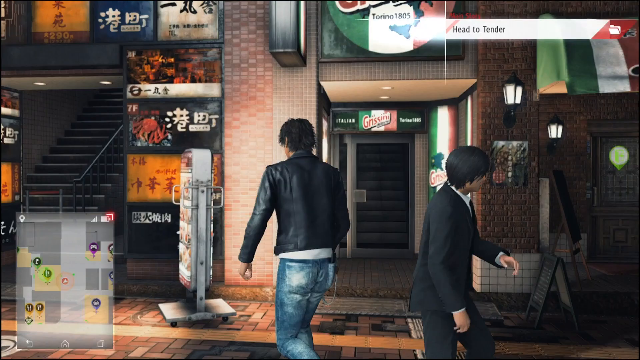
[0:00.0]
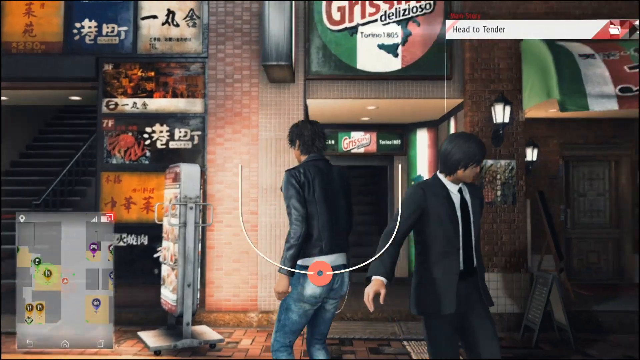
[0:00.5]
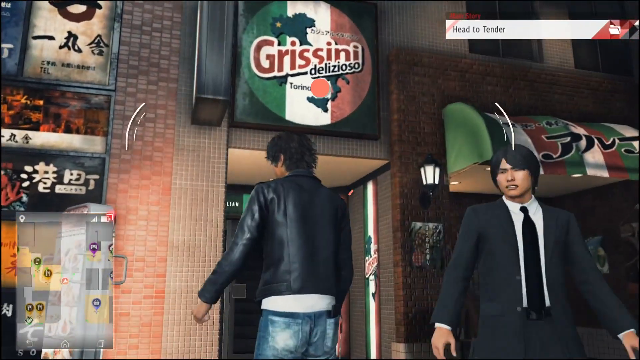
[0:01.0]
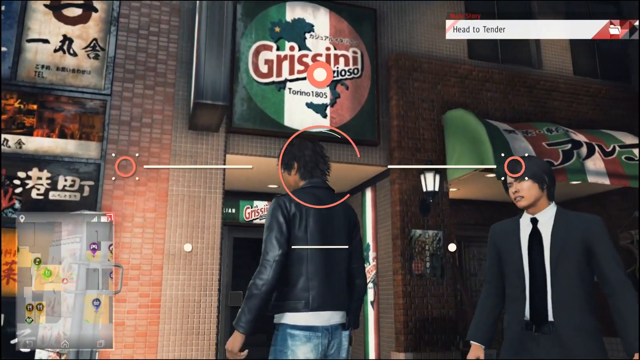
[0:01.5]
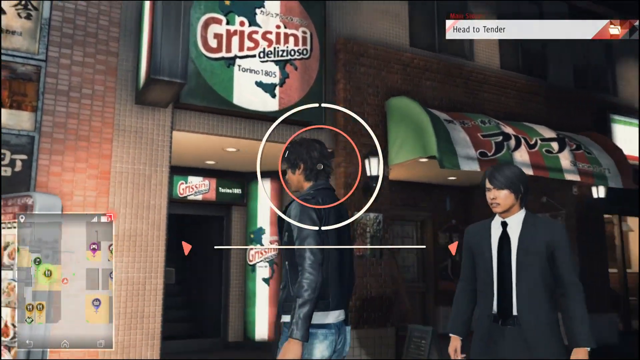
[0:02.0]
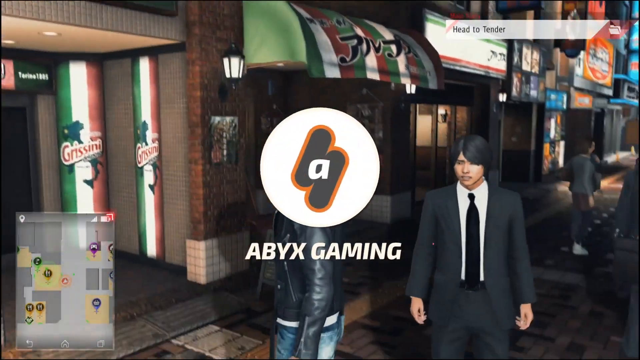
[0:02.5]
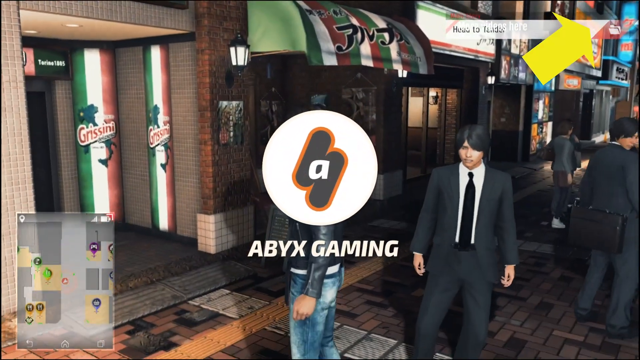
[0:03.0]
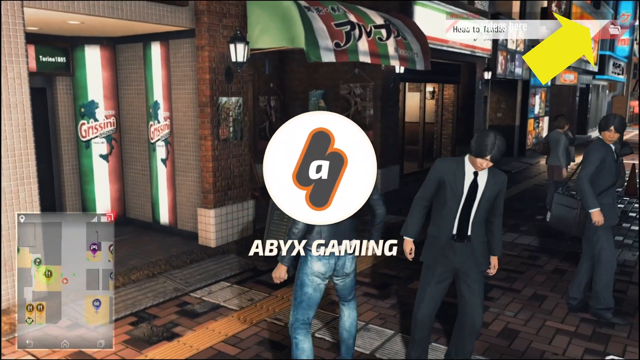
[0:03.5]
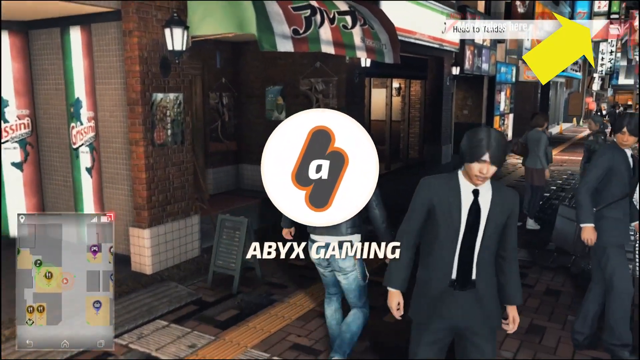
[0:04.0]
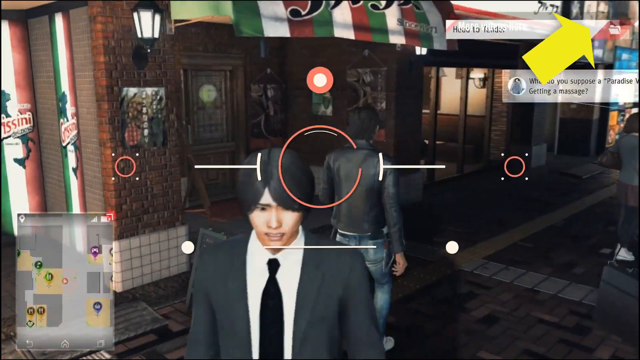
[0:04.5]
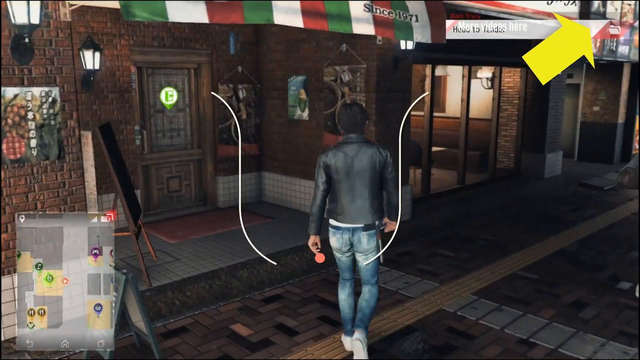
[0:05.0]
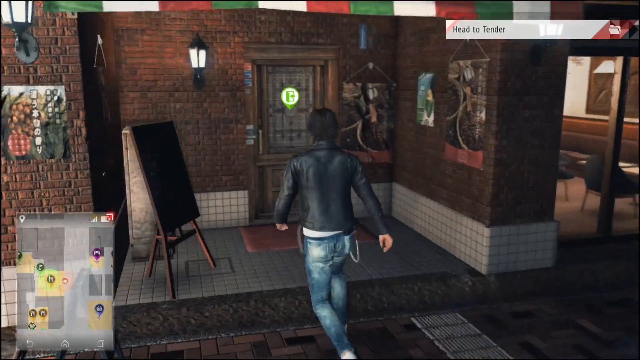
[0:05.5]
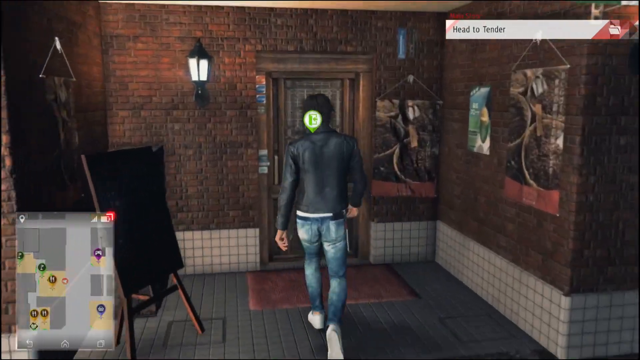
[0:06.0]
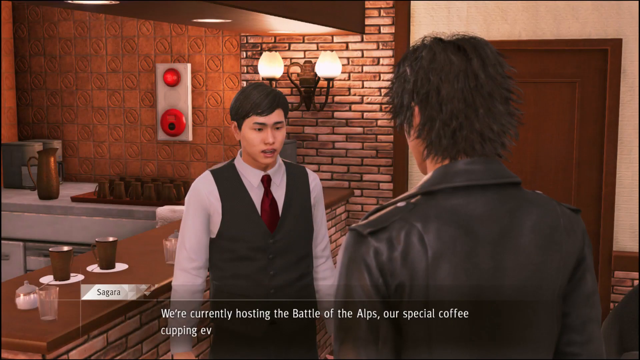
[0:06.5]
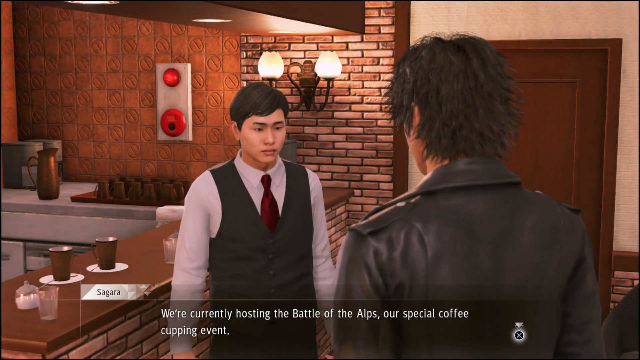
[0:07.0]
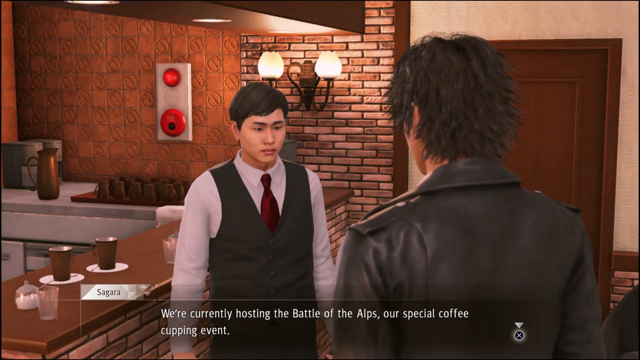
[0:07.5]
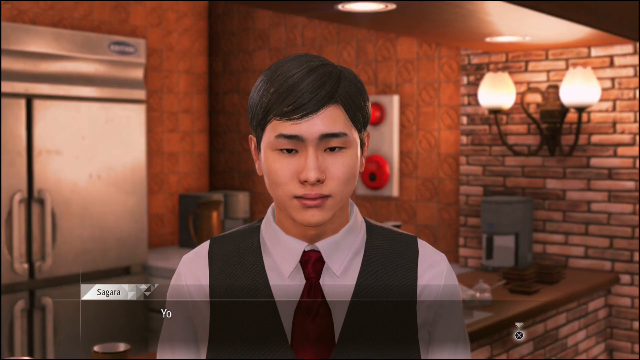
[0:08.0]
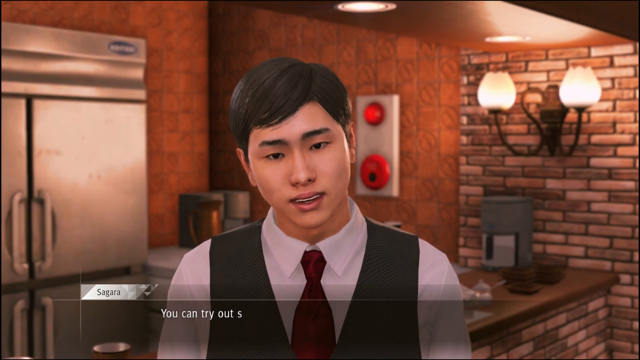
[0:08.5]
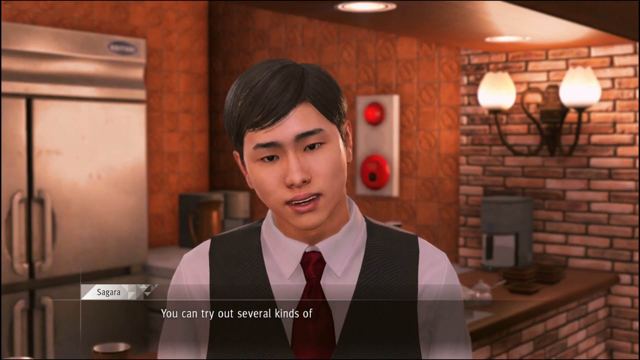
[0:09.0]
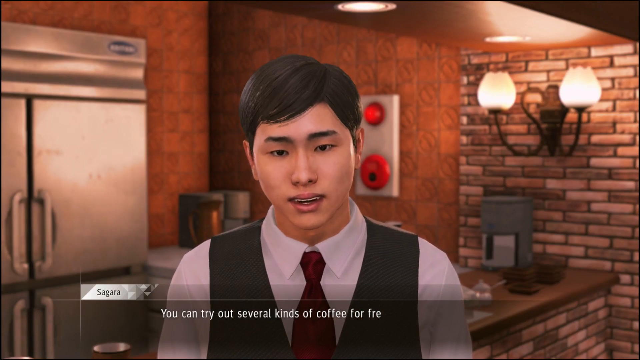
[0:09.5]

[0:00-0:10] Two men stand outside a restaurant, or possibly a deli. The signage on the outside of the restaurant is in an unfamiliar language that looks like it might be Chinese or Japanese. One of the men wears a suit, and the other wears blue jeans and a black leather jacket. The man in the black leather jacket enters a building. The video then cuts to another scene where the man in the leather jacket is speaking to another man who looks to be a waiter or a server of some sort. The server wears a white button-up shirt underneath a black vest with a maroon tie.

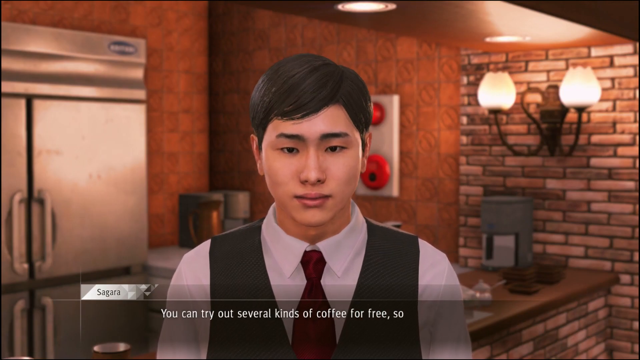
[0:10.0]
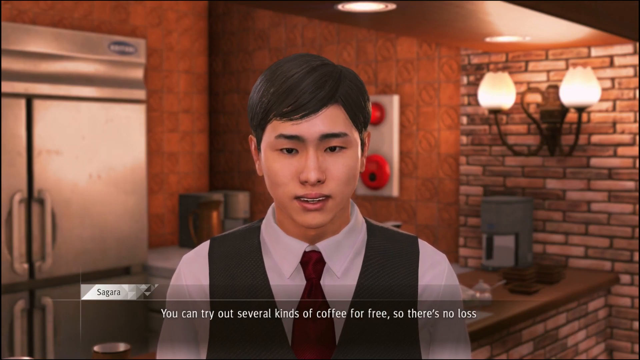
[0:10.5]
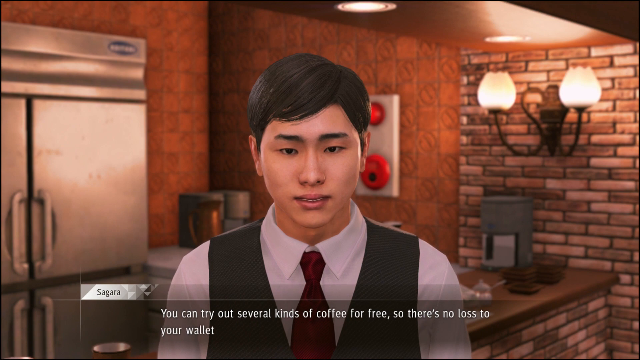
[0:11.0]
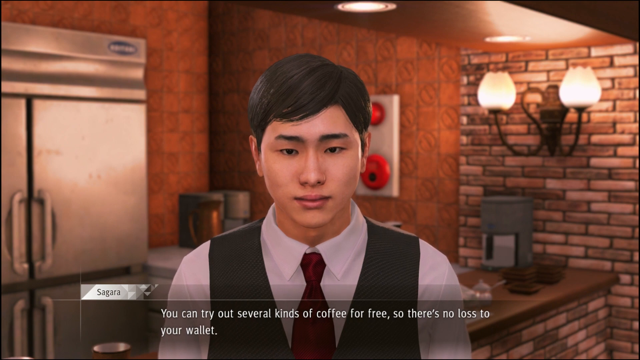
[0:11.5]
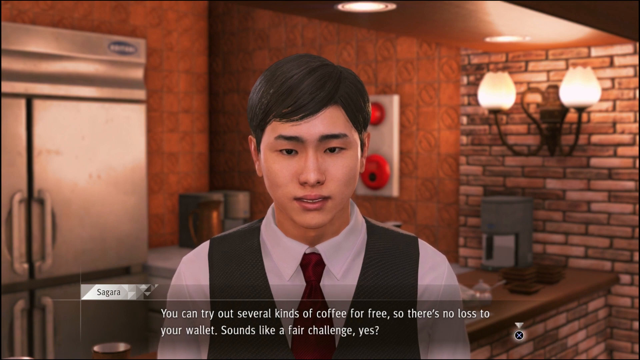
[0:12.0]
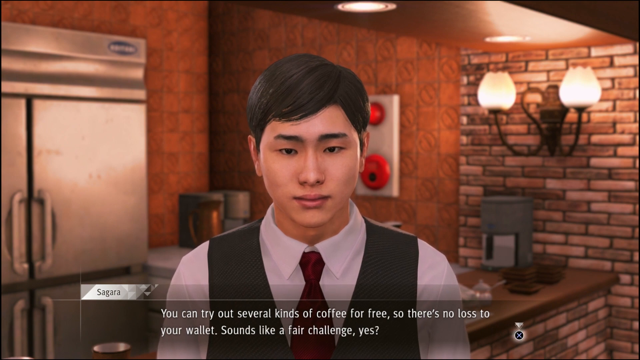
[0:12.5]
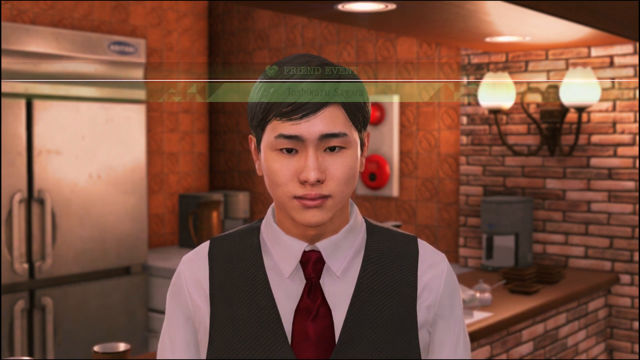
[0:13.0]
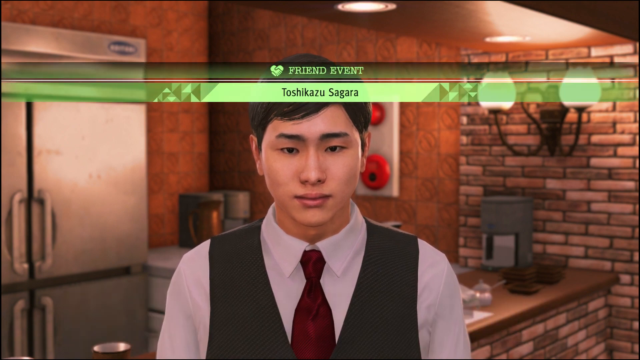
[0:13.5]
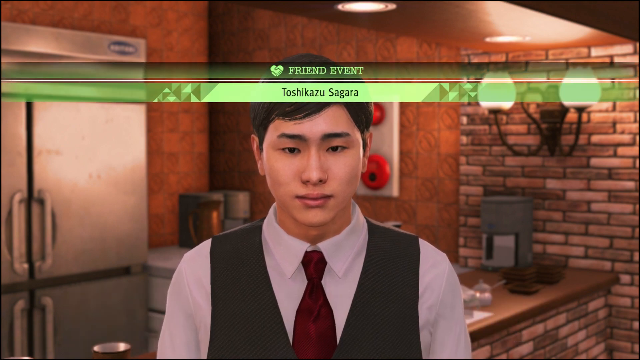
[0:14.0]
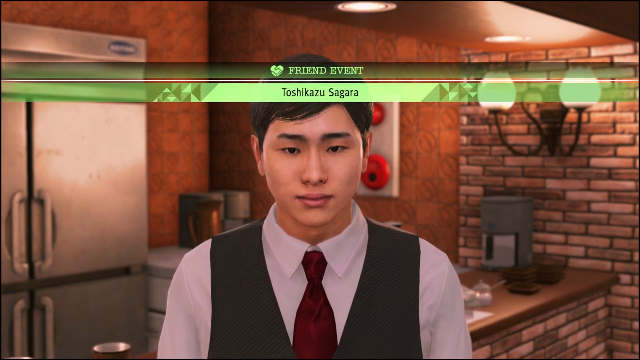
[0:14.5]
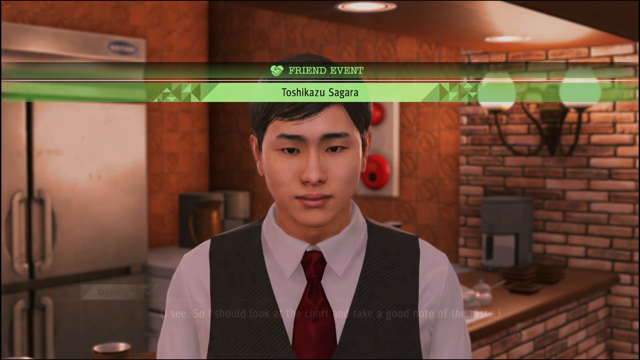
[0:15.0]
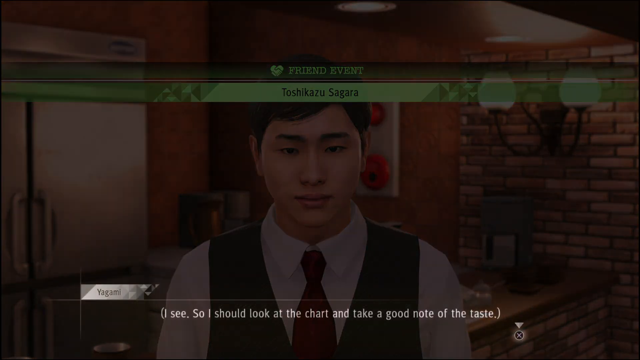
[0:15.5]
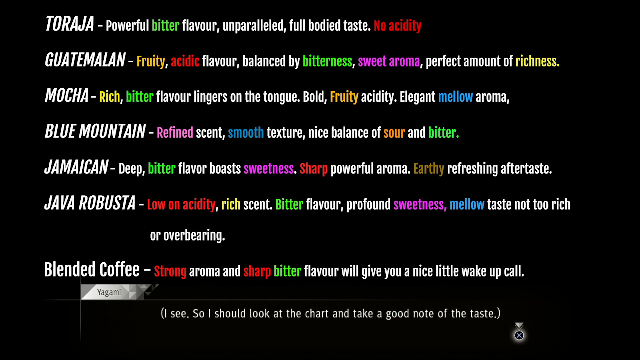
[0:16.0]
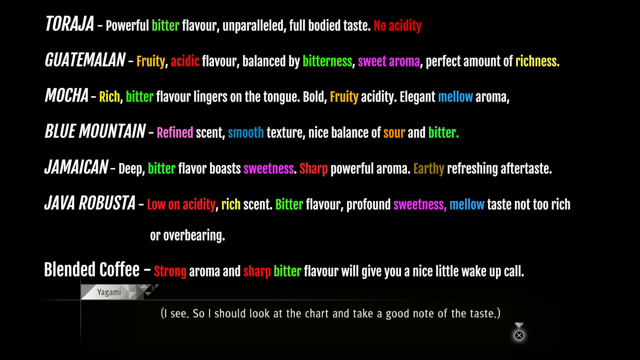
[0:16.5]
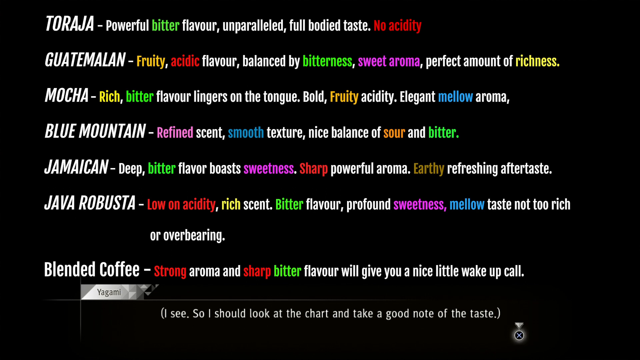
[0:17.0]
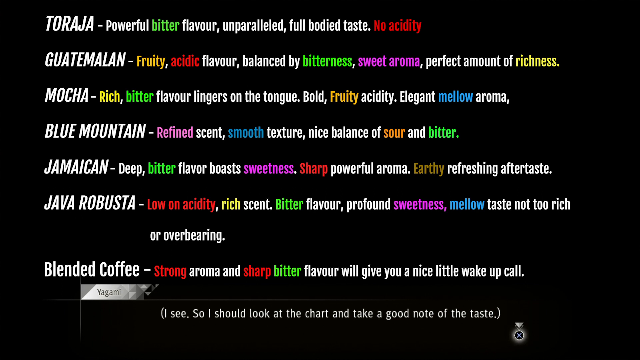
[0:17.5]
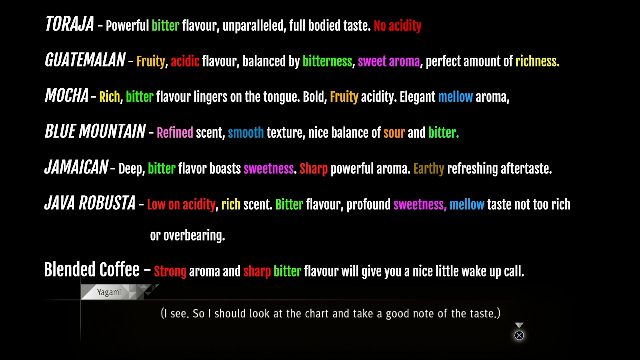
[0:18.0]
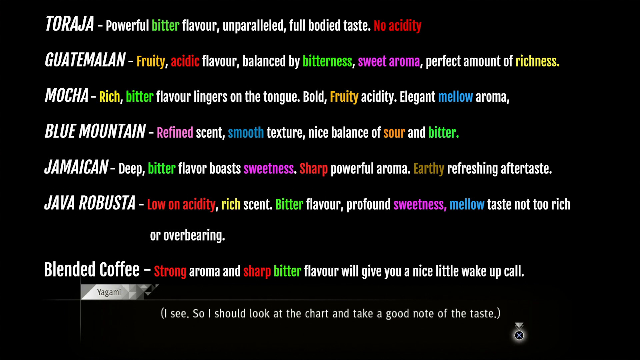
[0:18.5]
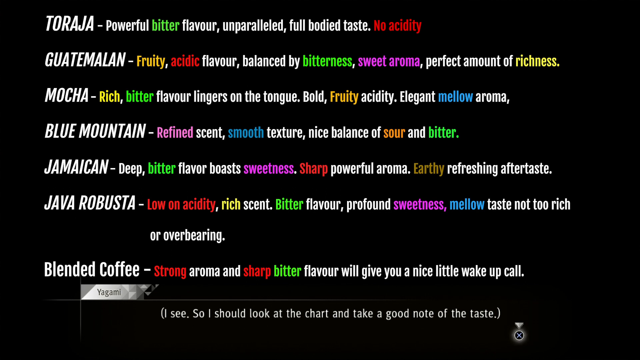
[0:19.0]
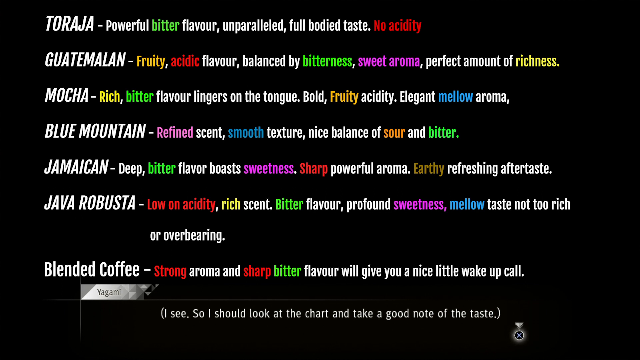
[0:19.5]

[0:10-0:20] A man who looks to be a server or a waiter of some sort wears a white shirt with a black vest and a maroon tie. He has black hair. He is talking to another character who cannot be seen on the screen. The video is captioned, and the visible part of the caption reads "you can try out several kinds of coffee for free so there's no loss to". The video then displays several options for coffee in a menu. The menu lists the types of coffee: Toraja, Guatemalan, Mocha, Blue Mountain, Jamaican, Java Robusta, and blended coffee. To the right of the name of each type of coffee is a description.